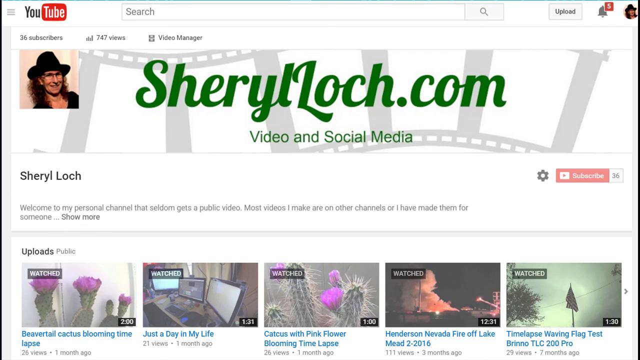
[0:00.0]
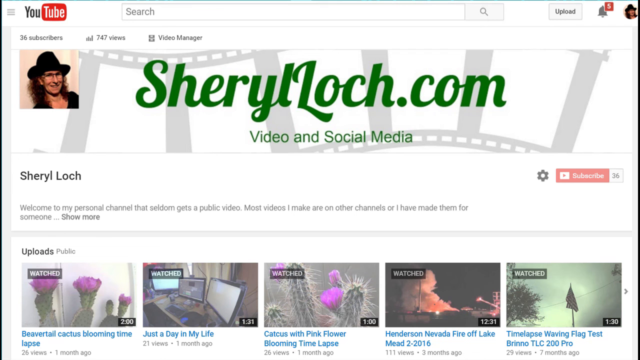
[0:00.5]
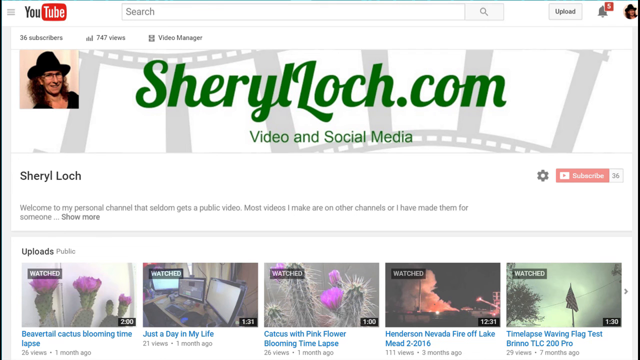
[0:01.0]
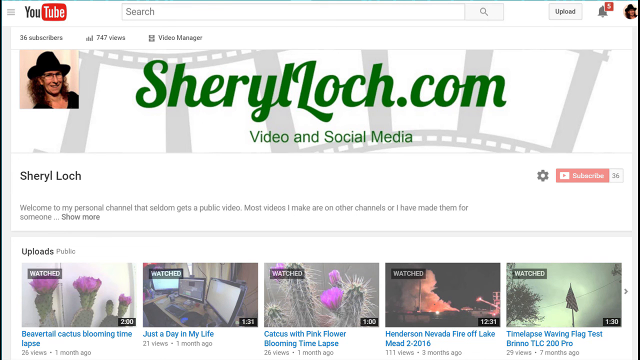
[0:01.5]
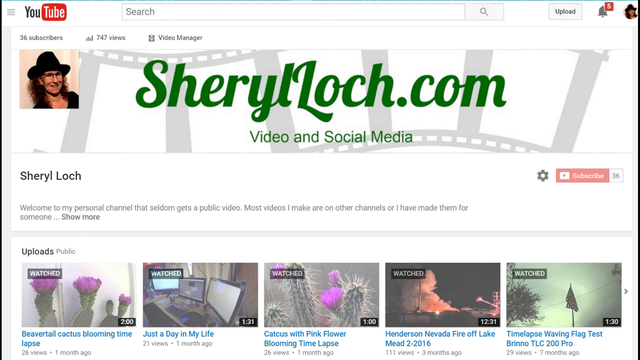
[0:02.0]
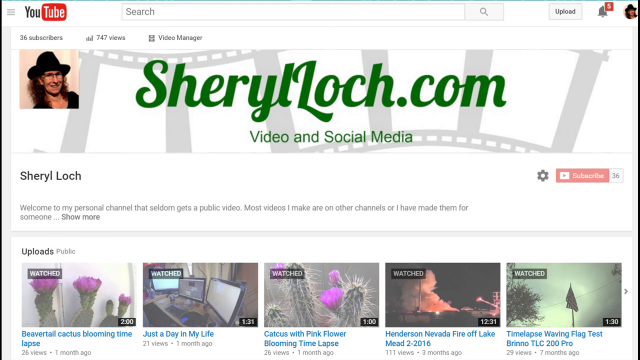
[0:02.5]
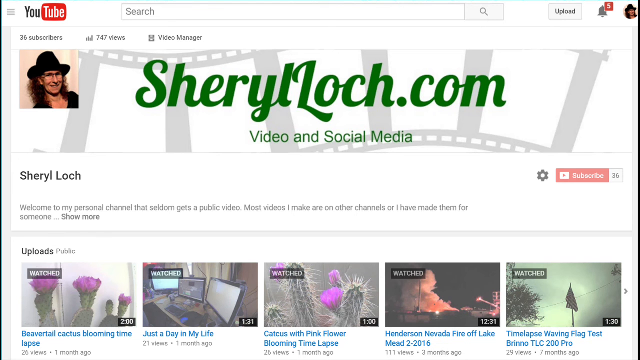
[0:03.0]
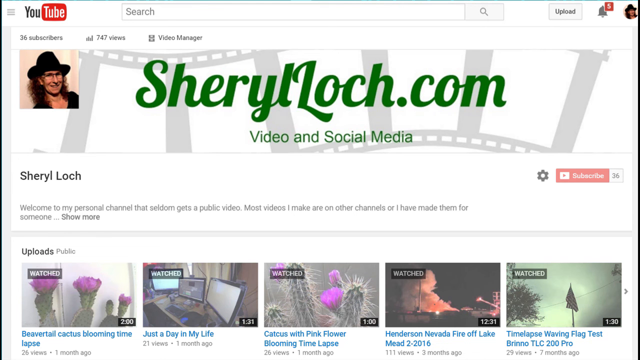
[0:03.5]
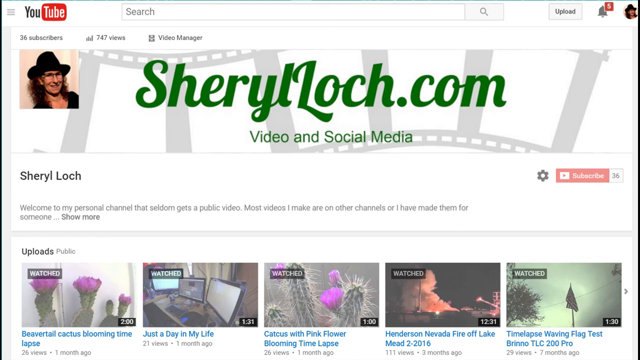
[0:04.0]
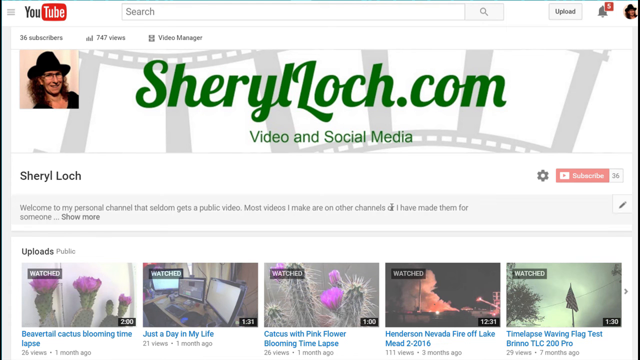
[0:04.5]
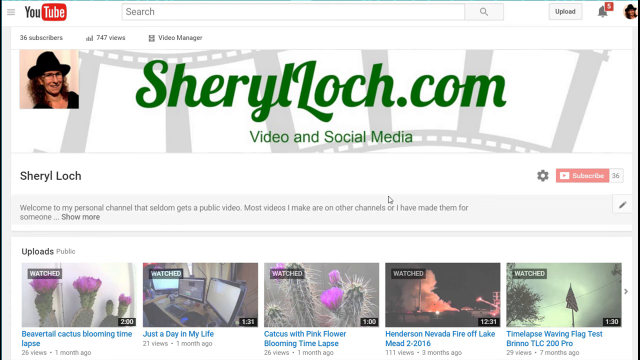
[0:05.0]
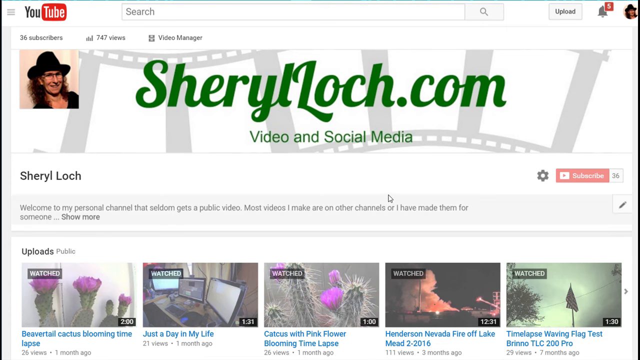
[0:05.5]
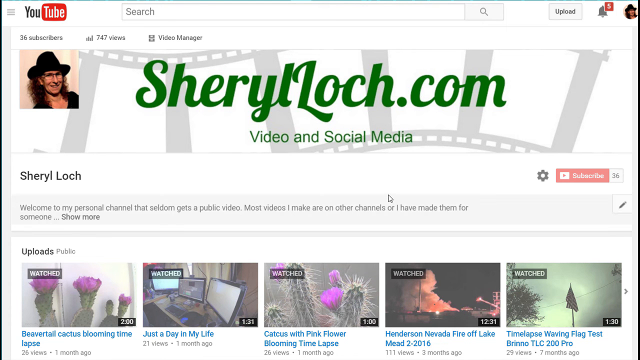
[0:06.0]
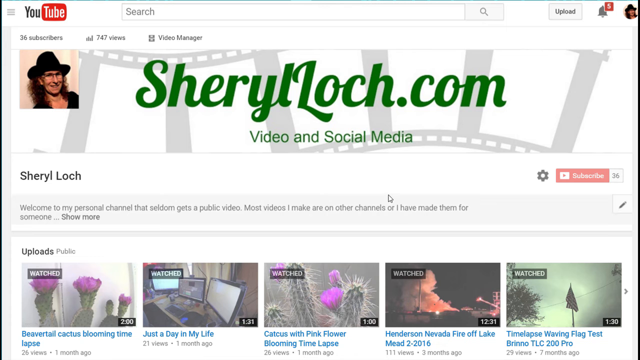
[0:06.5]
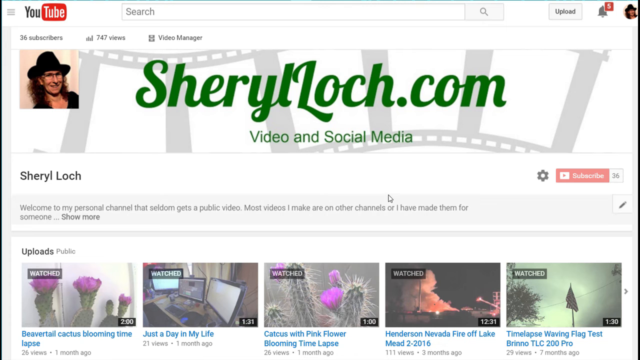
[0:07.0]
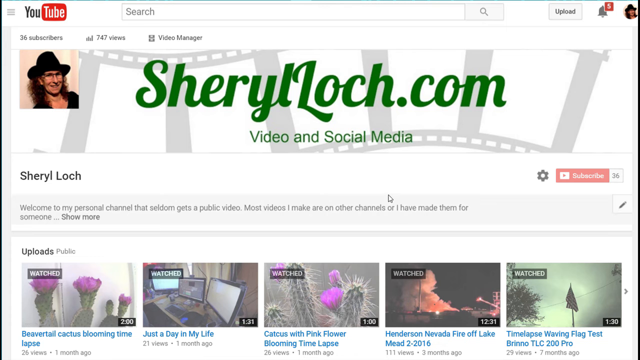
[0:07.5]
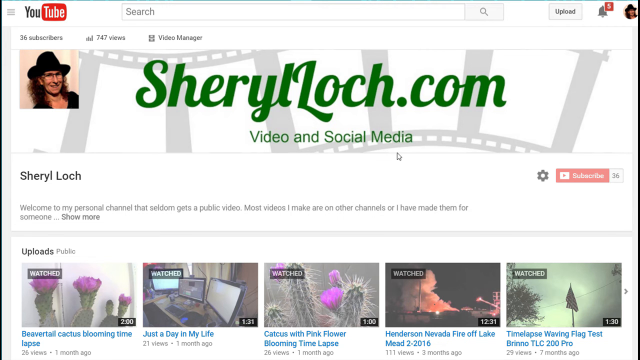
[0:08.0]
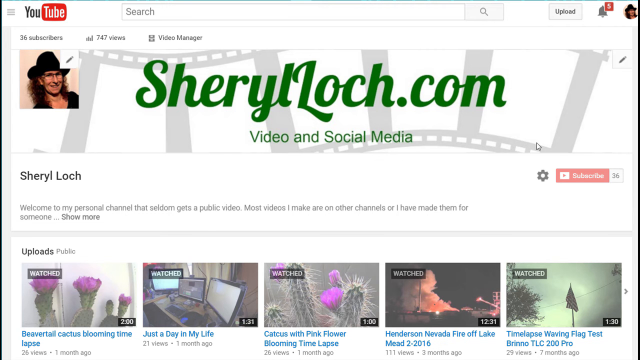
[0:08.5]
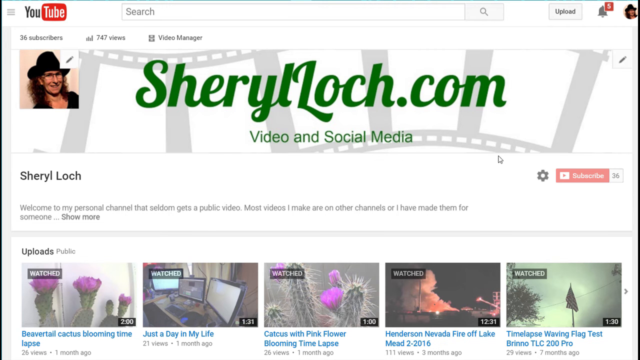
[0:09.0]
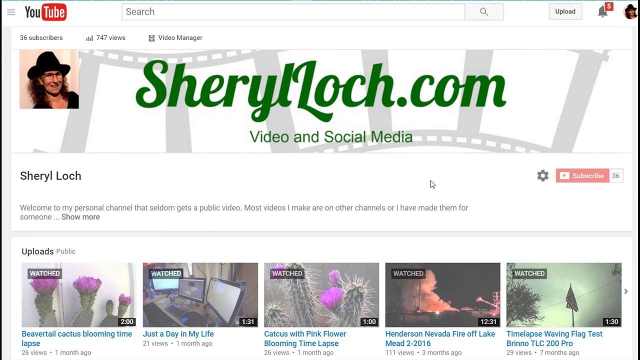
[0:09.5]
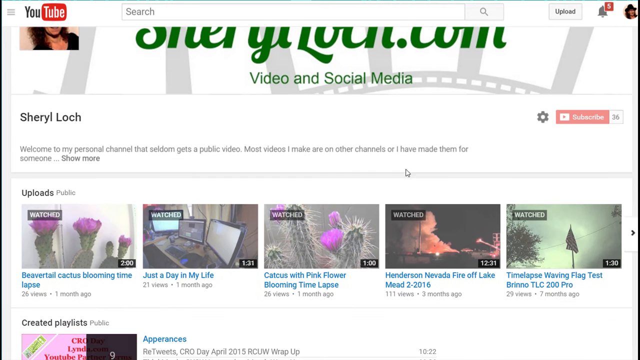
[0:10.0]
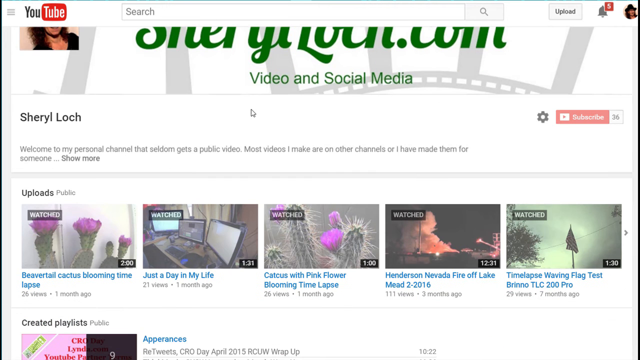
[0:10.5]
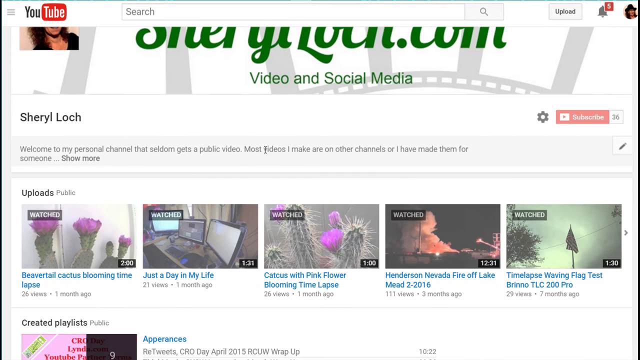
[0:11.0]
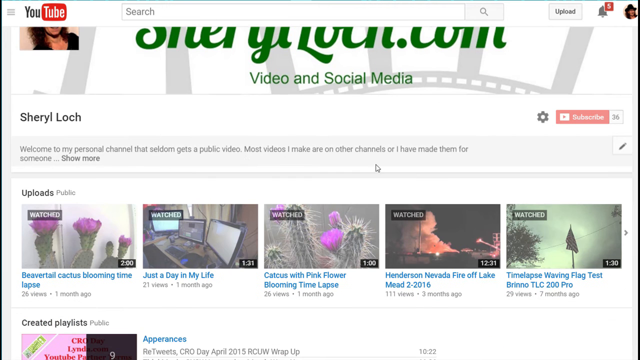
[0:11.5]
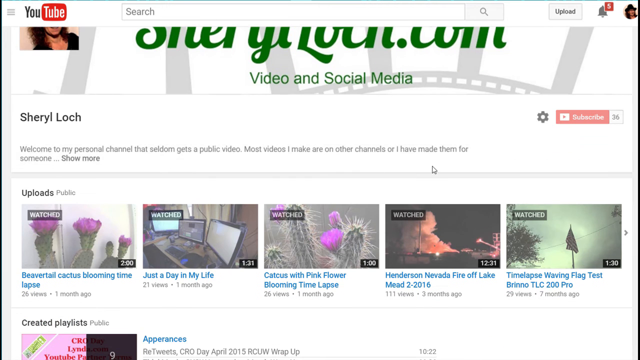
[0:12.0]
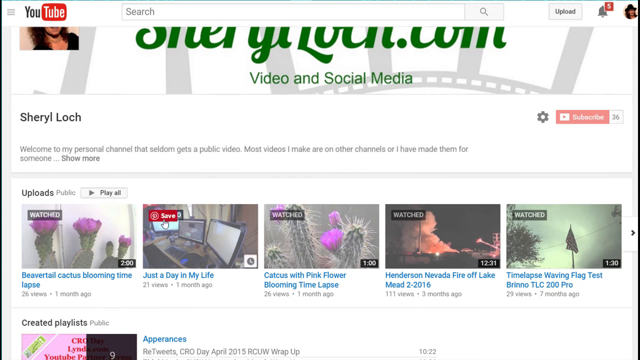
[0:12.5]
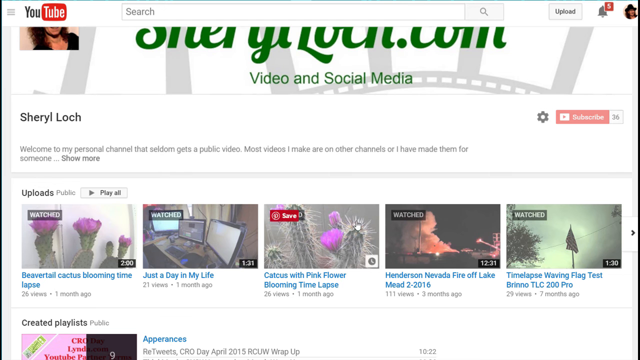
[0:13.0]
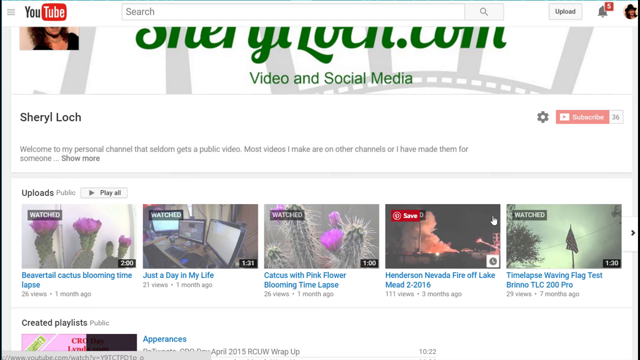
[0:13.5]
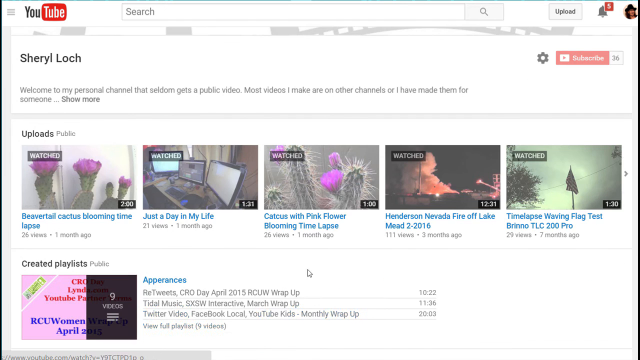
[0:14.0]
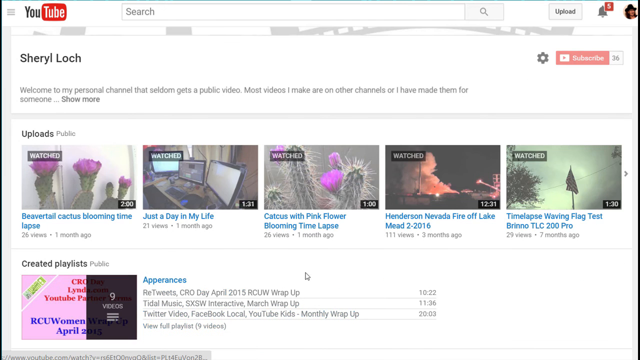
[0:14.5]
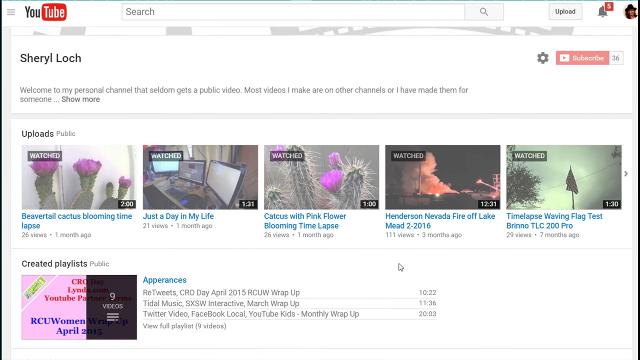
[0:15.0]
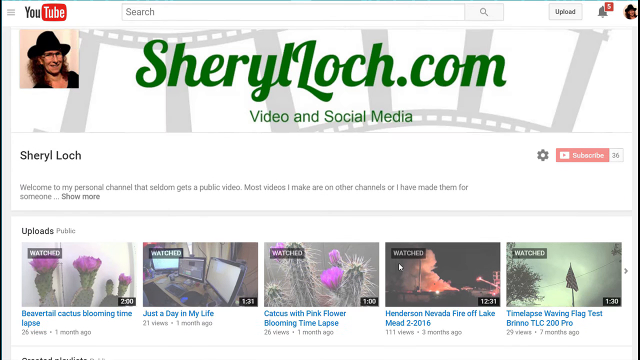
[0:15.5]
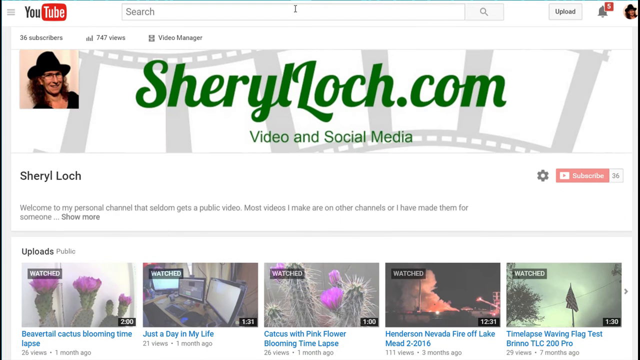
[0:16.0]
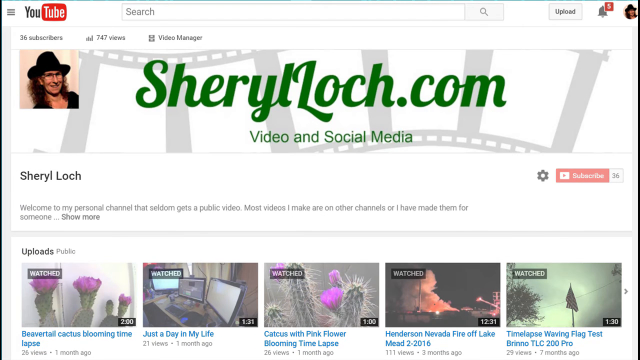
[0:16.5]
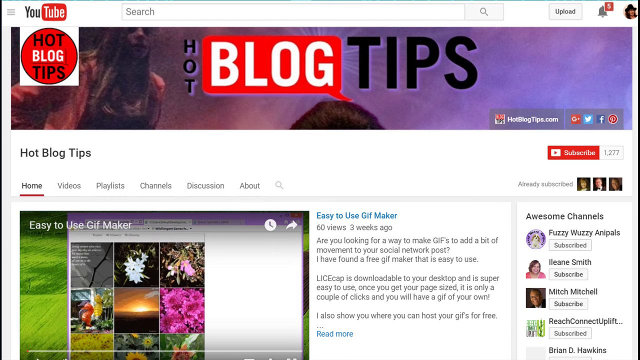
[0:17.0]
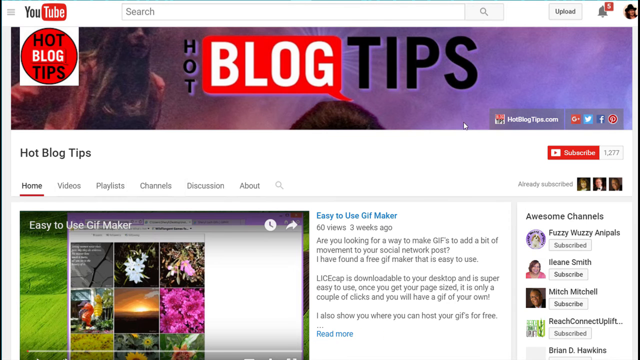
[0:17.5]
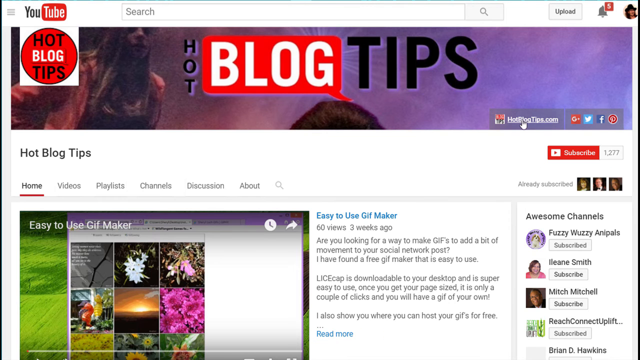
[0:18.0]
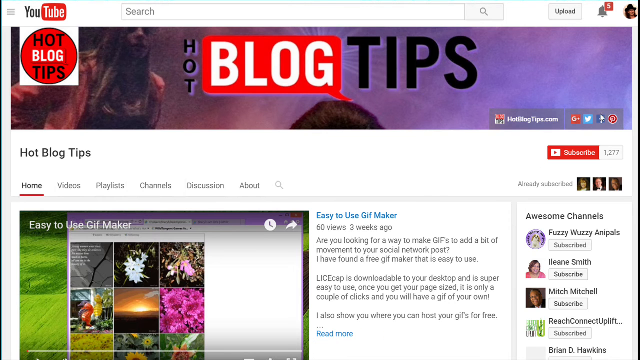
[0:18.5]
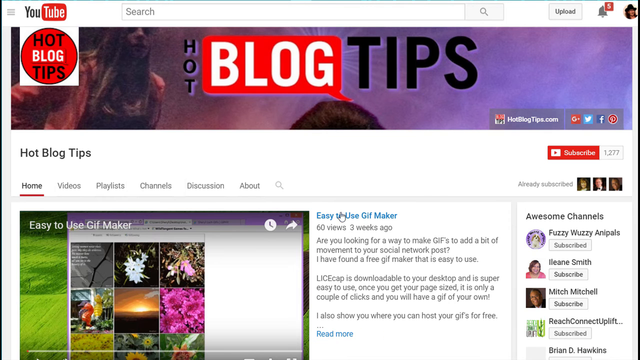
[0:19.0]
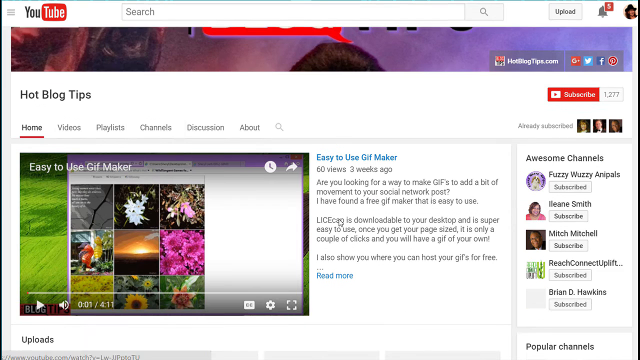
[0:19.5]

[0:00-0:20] A website titled cheryllock.com video and social media is on screen, and the cursor moves around the page, looking over the options and everything the website seems to offer. An introduction at the start reads "cheryllock" and "welcome to my personal channel that seldom gets a public video most videos i make are on other channels or i have made them for someone". Underneath the introduction is a selection of uploaded short videos. A YouTube icon is in the top left corner of the screen, and on the right, underneath the description, there is an option to subscribe. The page offers many suggestions and clips, including gift ideas. In the top left corner is a profile picture, apparently of cheryllock, showing what looks like a middle-aged woman wearing spectacles and a black trilby hat.